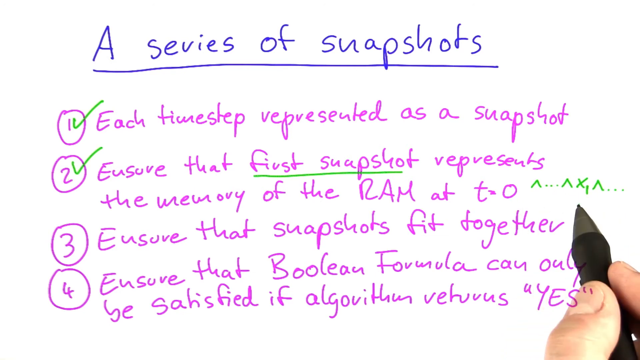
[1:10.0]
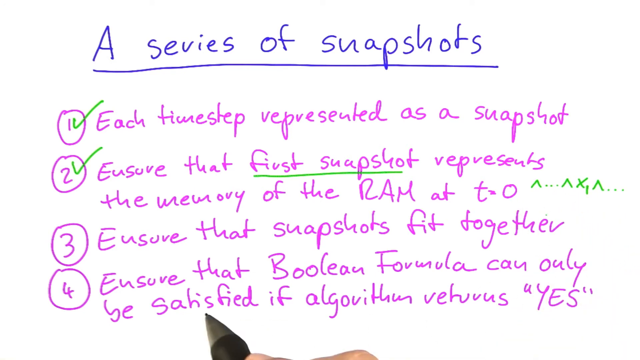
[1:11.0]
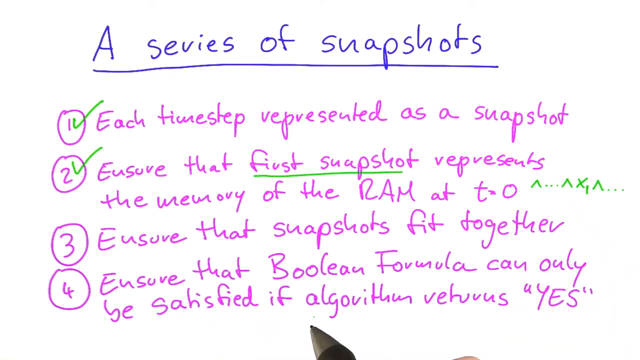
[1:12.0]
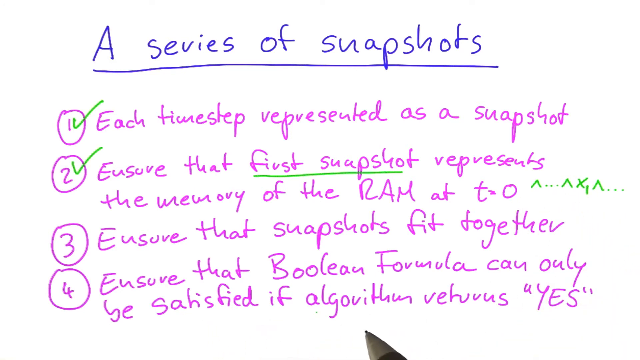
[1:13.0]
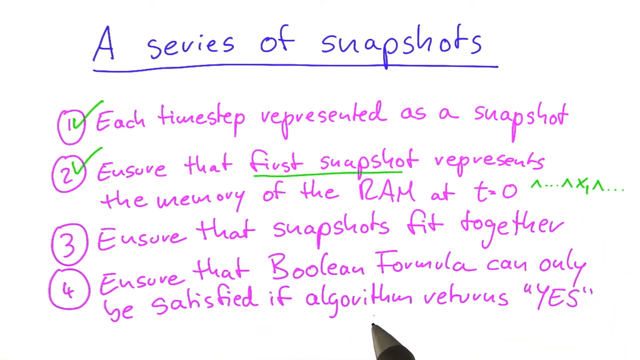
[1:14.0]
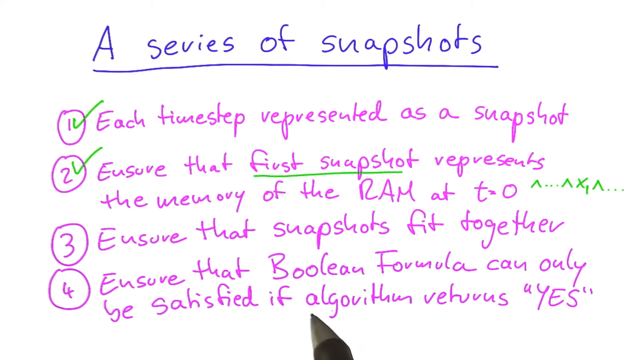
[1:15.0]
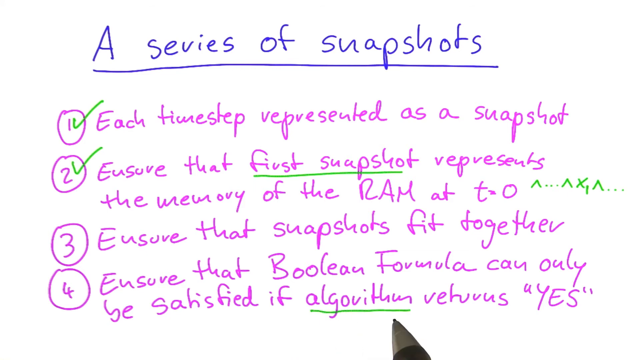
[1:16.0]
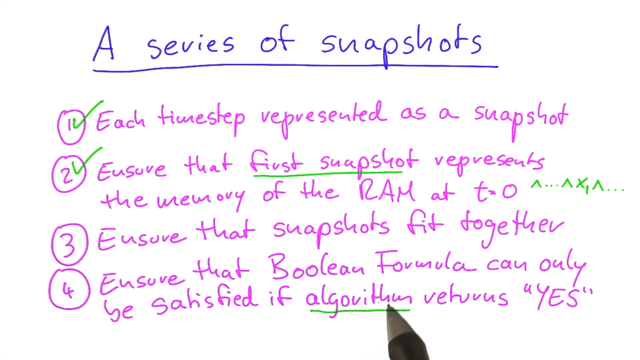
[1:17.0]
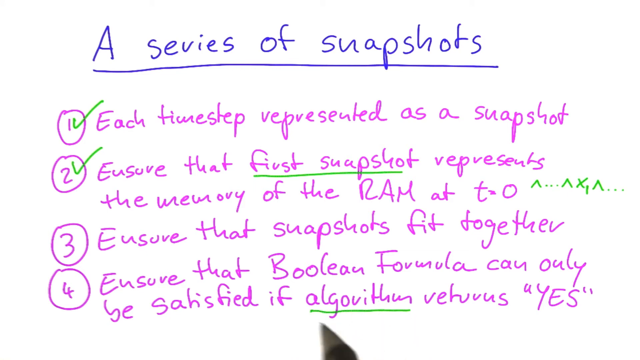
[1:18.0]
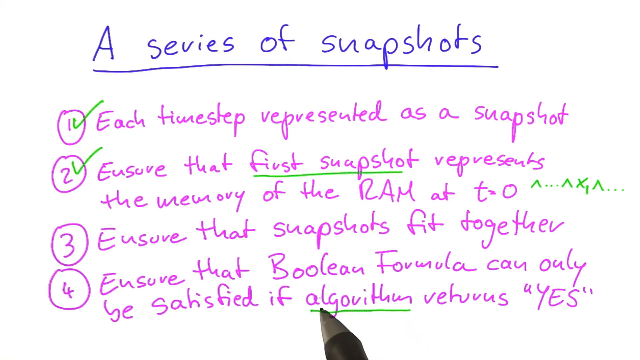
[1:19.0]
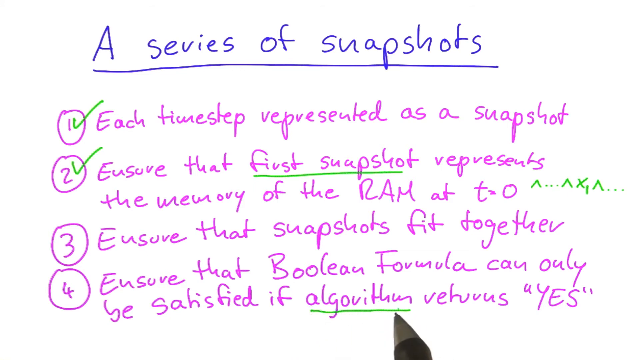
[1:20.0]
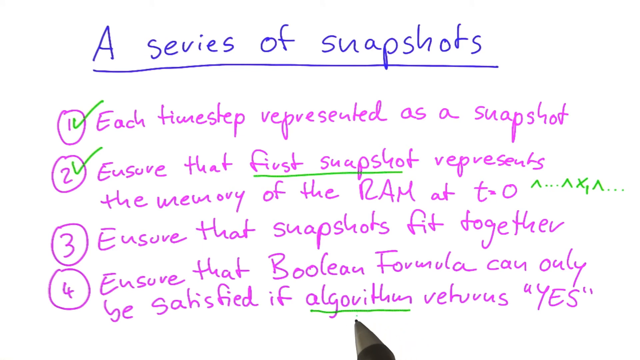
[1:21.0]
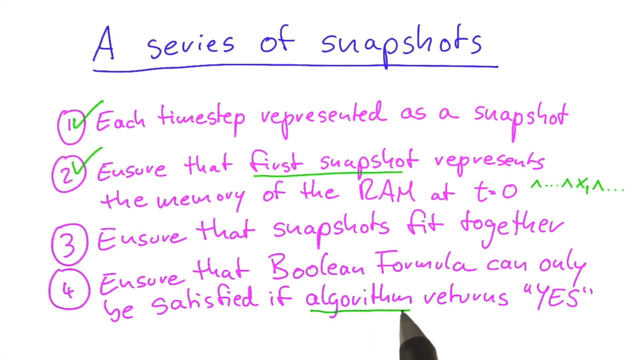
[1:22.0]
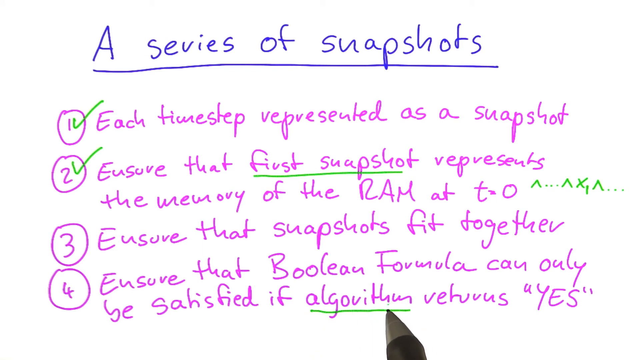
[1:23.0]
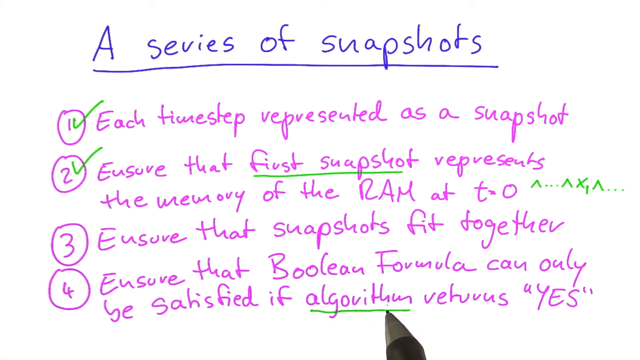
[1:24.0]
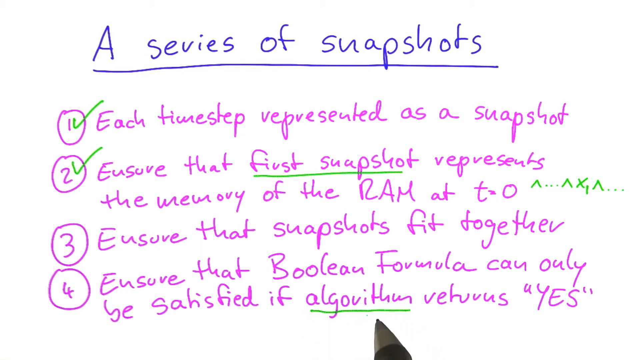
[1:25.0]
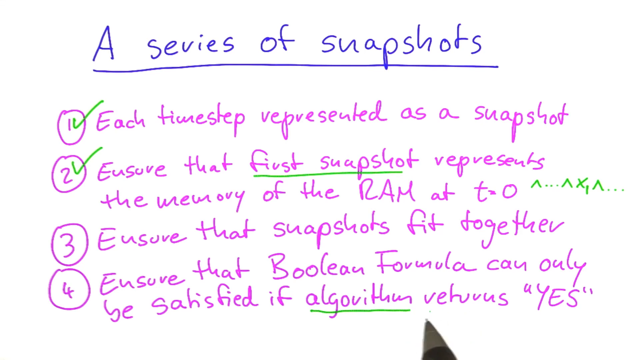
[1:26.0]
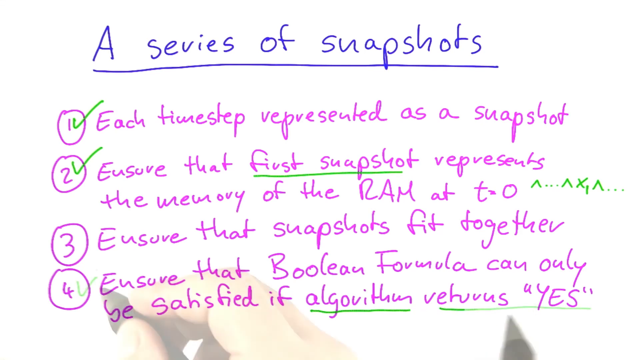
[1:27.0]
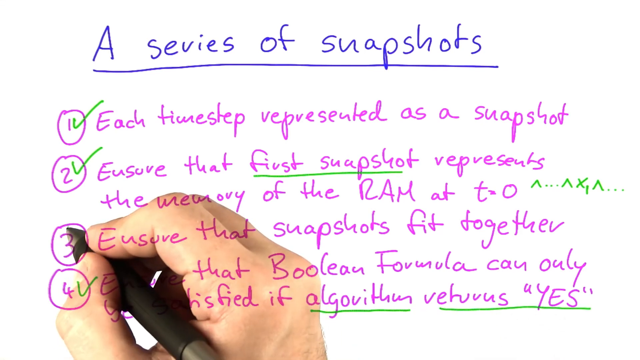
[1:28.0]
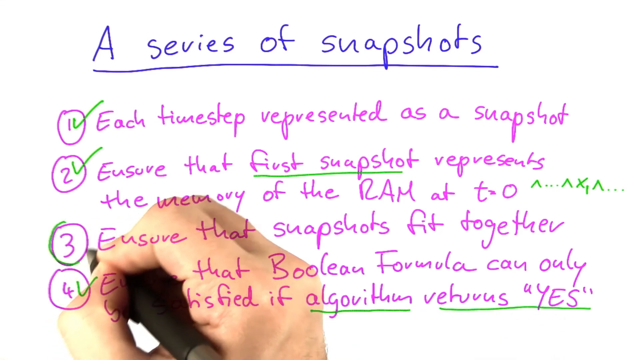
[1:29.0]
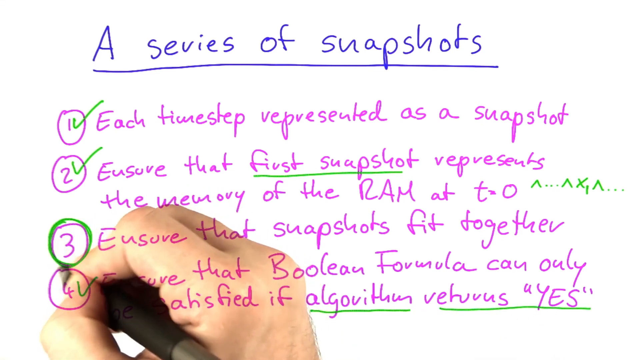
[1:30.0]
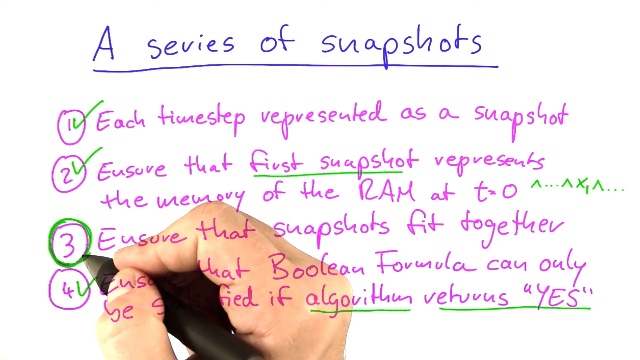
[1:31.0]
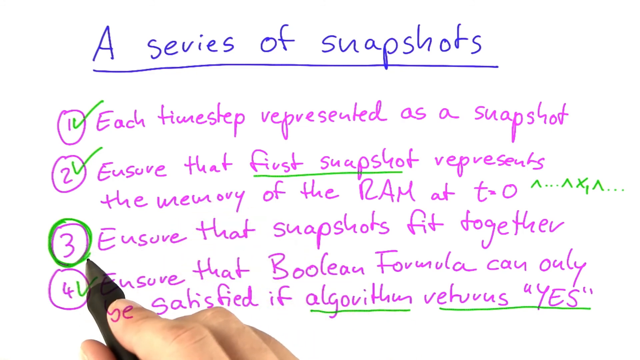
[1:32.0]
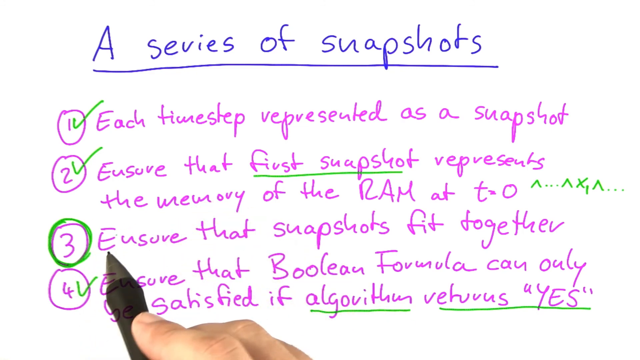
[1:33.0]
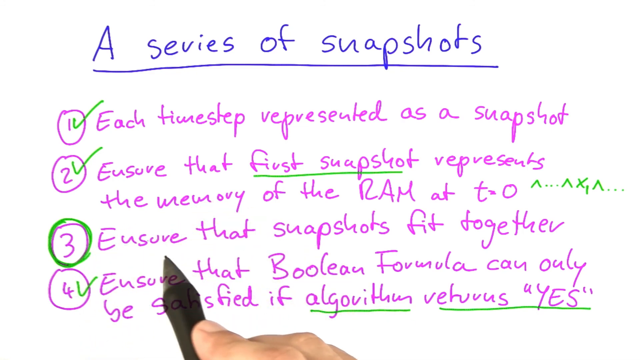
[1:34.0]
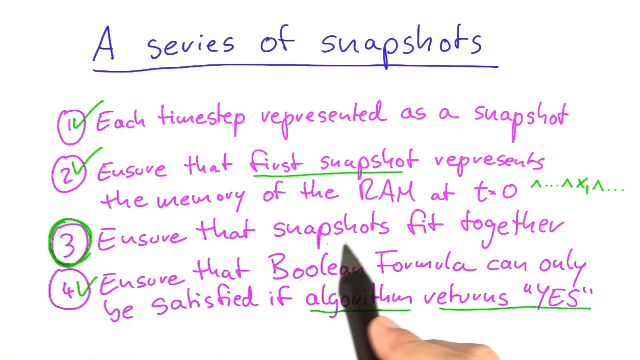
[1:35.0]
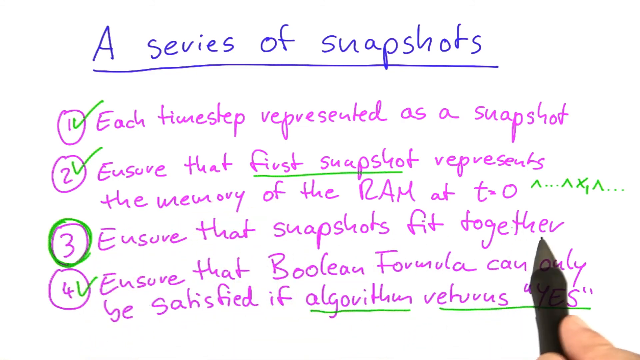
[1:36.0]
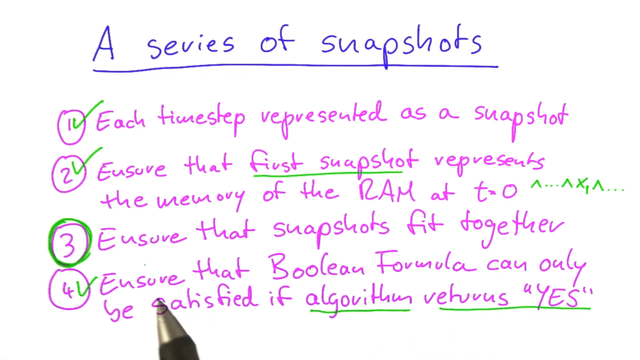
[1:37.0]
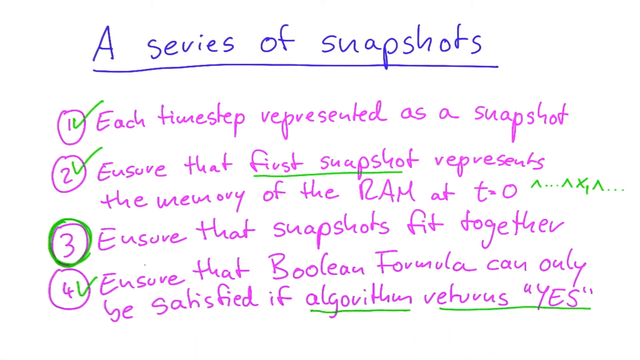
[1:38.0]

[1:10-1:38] The person holds the pen and continues marking the sentences: sentence number three is now marked in green, and more words are underlined than before, including a word in sentence number four, algorithm. The topic, "a series of snapshots," is written in blue and underlined in blue. The four sentences are written in pink and marked in green. He holds the pen in his right hand, and the writing is not red but blue, pink and green. The sentences apparently are being presented on a laptop.